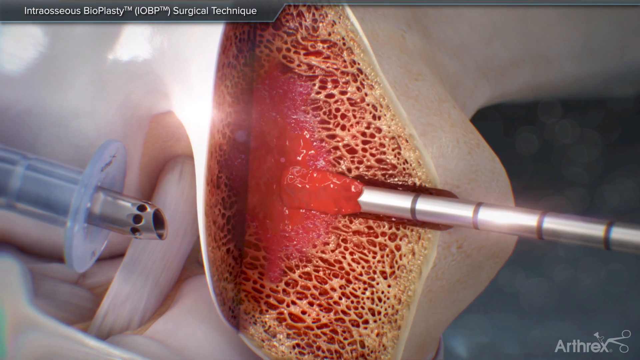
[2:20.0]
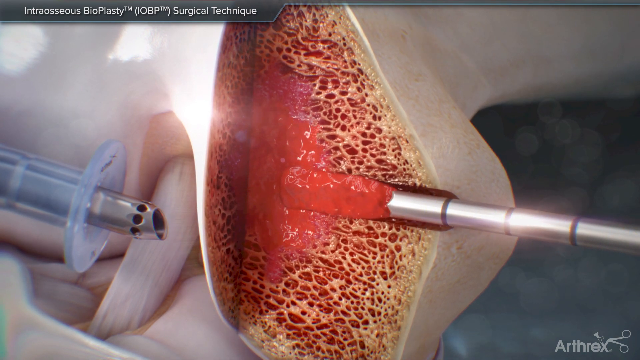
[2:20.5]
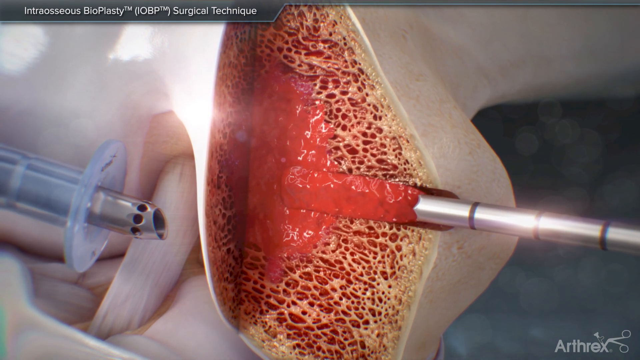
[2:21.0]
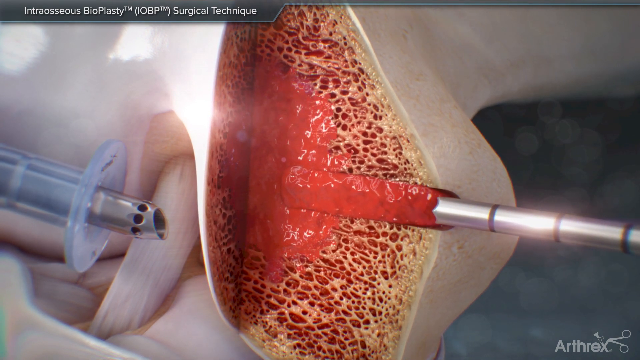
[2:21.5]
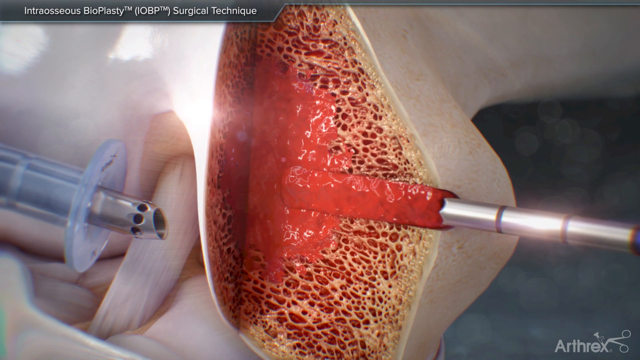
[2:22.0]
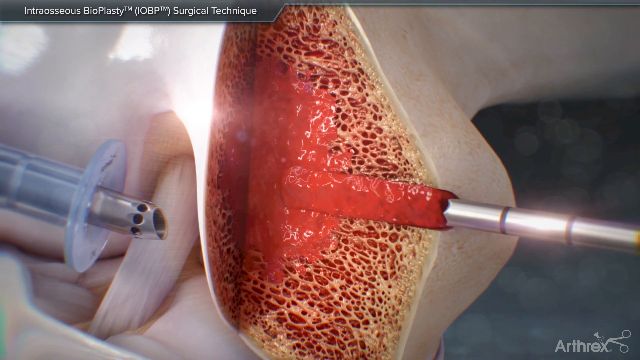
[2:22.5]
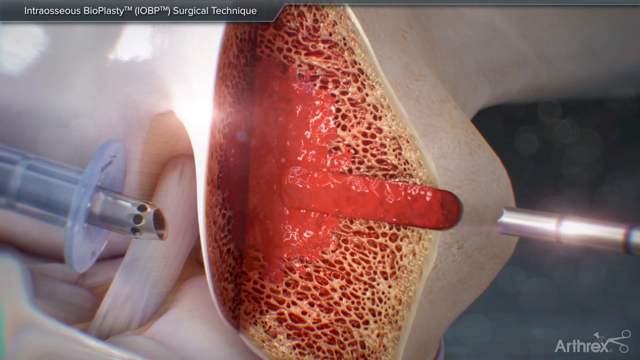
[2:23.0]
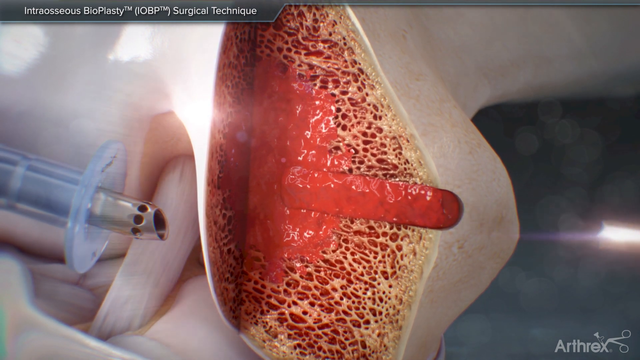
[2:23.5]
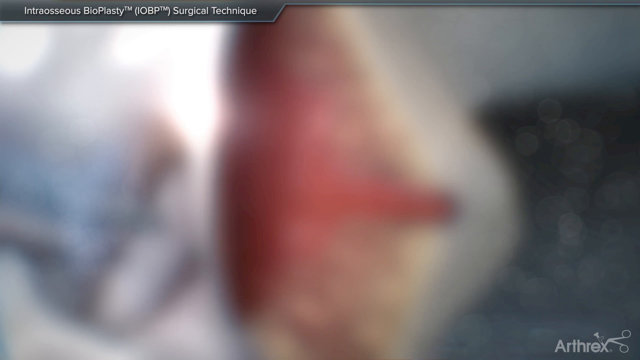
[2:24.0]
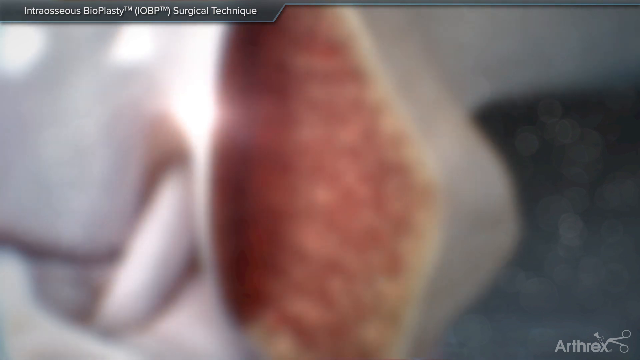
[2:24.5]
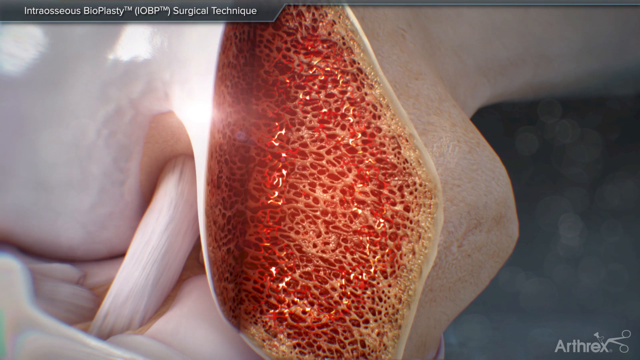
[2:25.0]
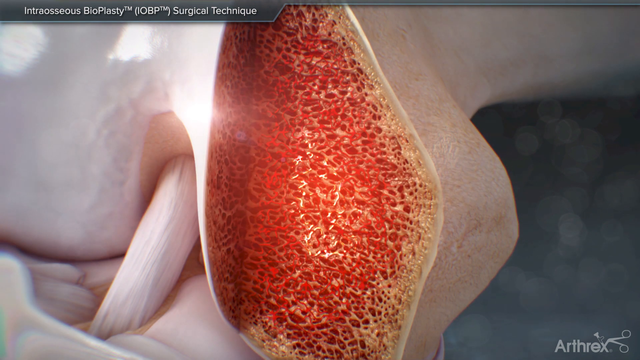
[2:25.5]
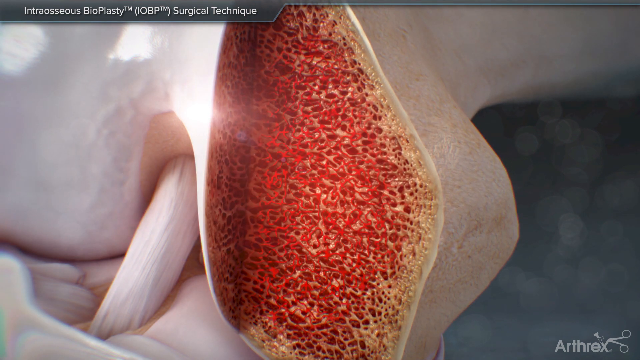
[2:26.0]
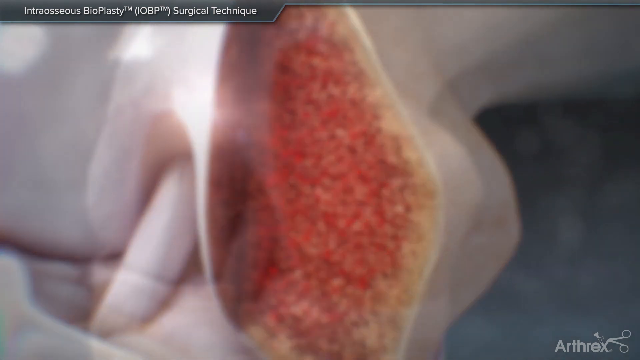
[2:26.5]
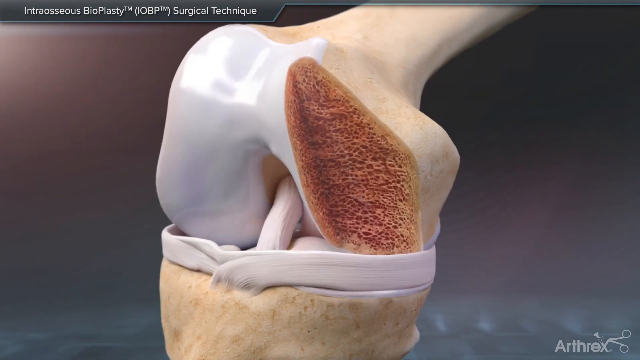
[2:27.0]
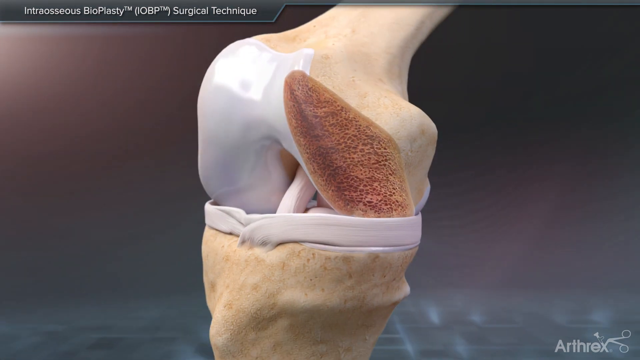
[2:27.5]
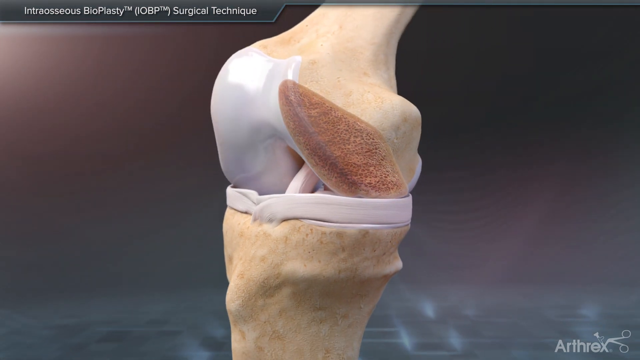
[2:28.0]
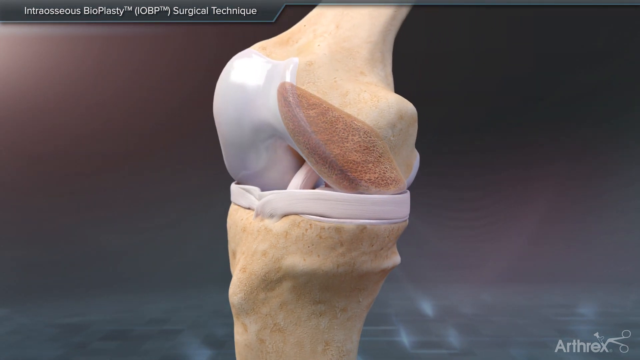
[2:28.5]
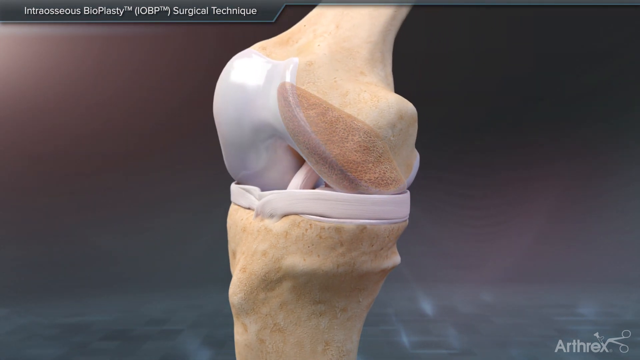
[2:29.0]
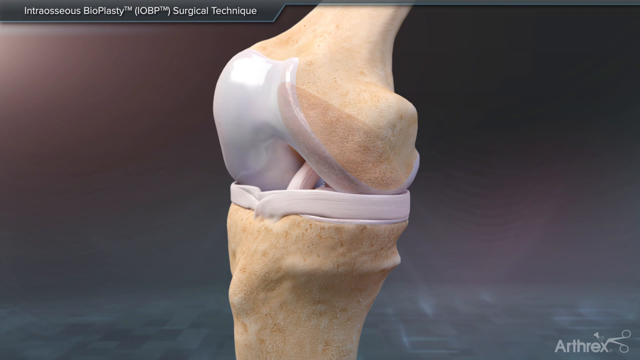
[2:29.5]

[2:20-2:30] The very large needle injects the combination of blood and the other fluid into the bone at the end of the femur as it is removed from left to right out of the drilled hole. In the 3D animation, the injected fluid, possibly stem cells, regenerates the damaged bone at the joint. The 3D model of the knee, where the damage was shown, now looks like the bone has been restored.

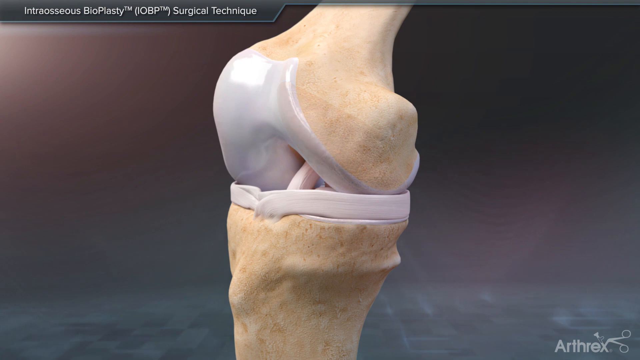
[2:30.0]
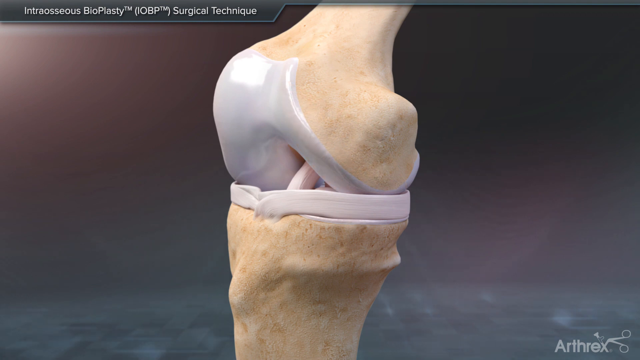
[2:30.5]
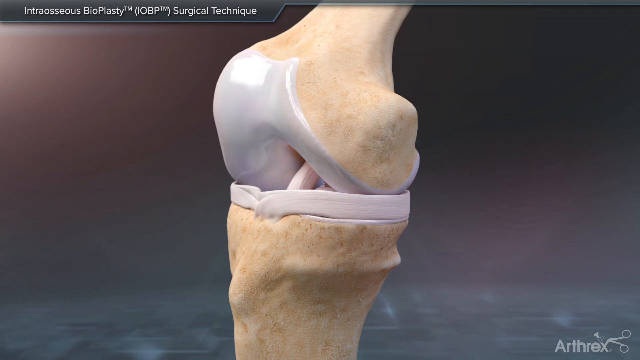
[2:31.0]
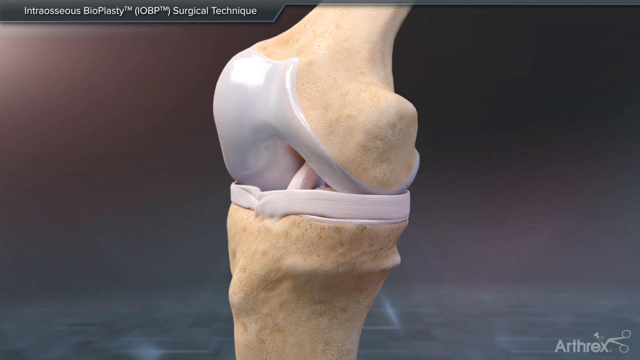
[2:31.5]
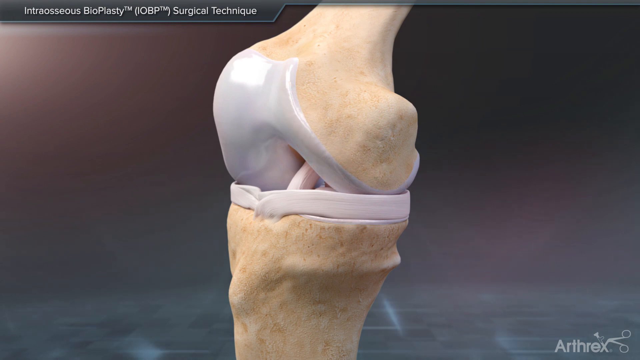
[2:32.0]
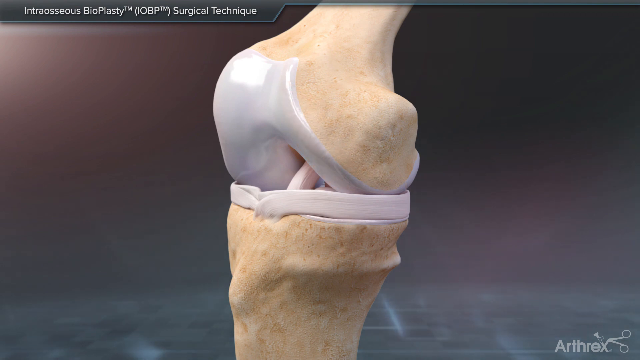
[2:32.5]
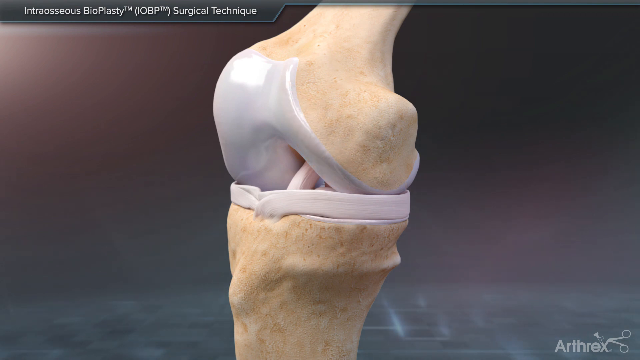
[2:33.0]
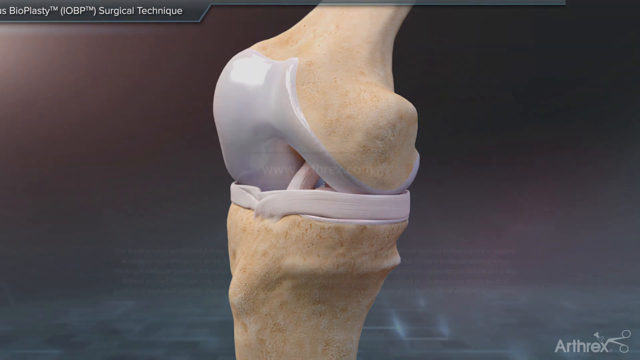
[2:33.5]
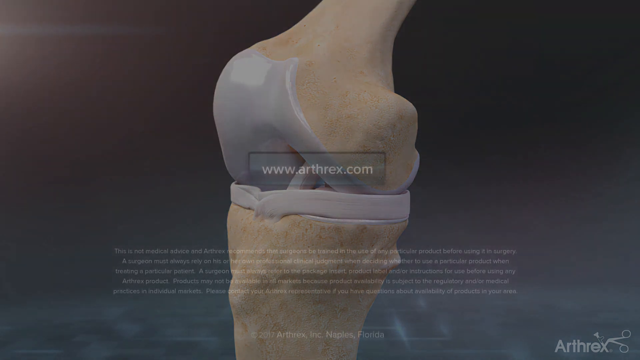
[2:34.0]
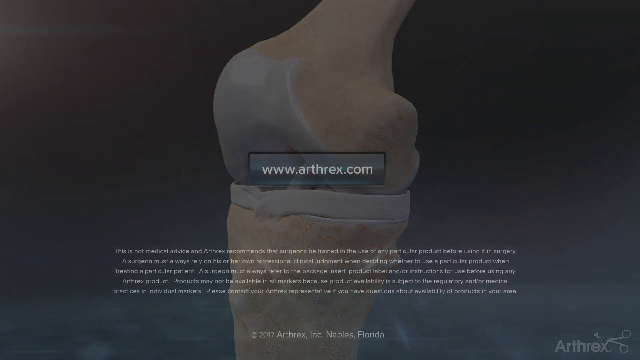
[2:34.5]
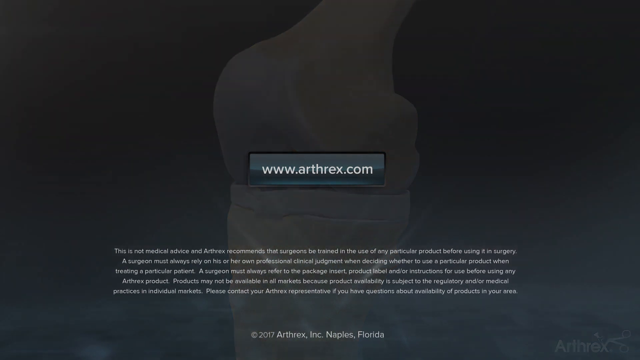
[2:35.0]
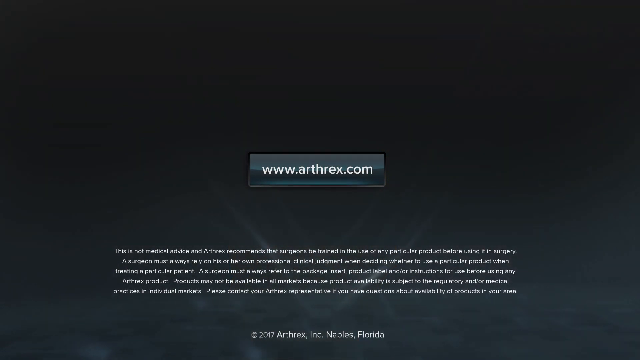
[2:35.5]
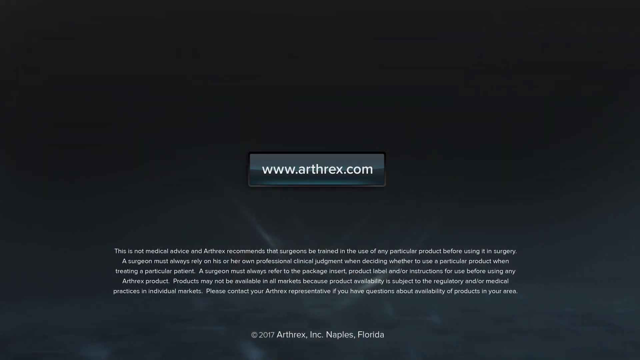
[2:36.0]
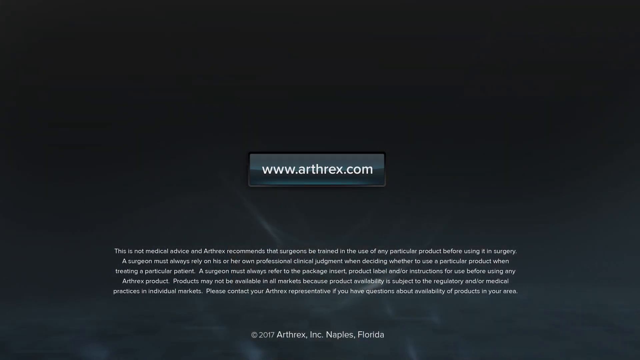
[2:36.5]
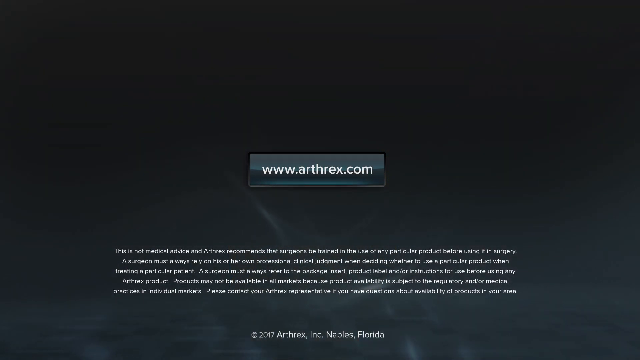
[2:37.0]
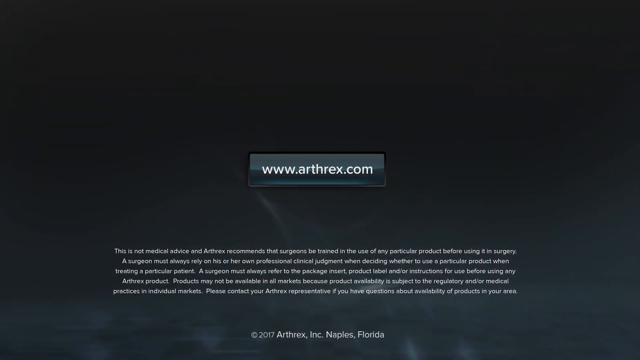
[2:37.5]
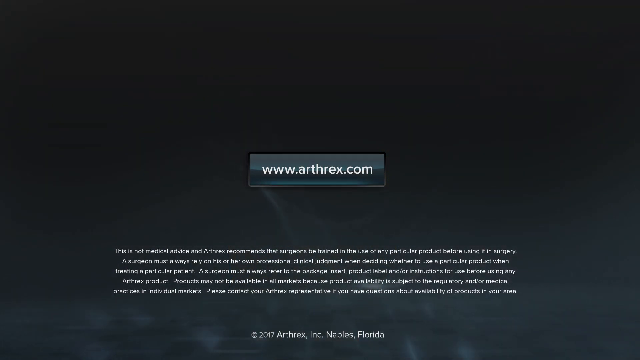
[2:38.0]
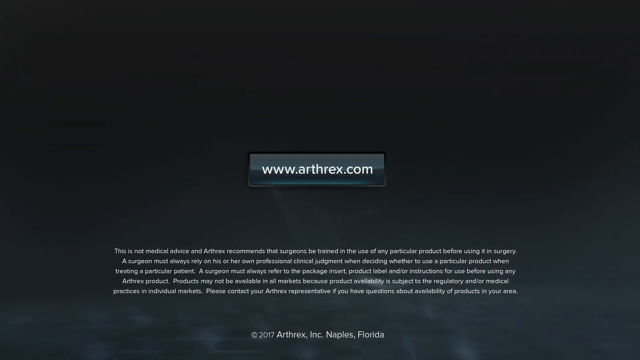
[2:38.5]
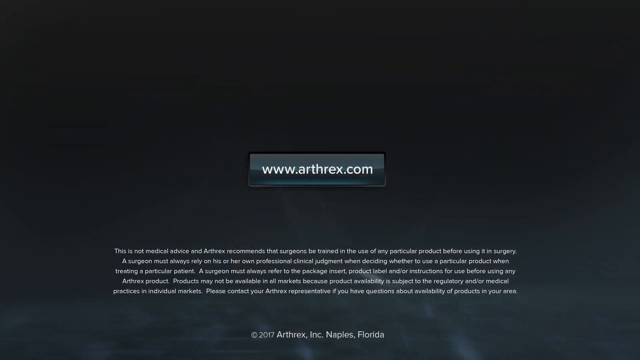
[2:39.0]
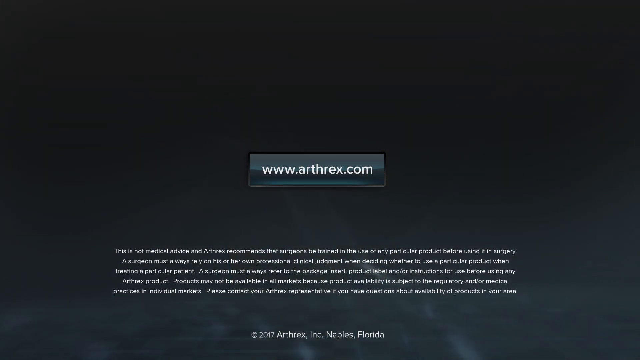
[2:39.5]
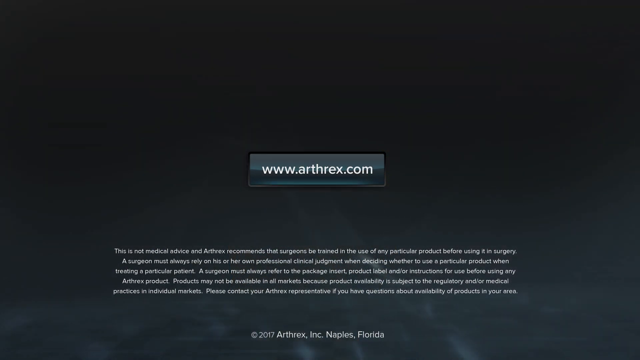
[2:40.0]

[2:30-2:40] The 3D model of the knee joint, focused on the end of the femur, shows the bone looking as though it has been repaired, presumably by the injected material. The ligament and the joint of the model are visible, with the model facing slightly to the left. In the upper left-hand corner, the animation is identified as modeling the procedure of the intraosseous bioplasty, or OBP, surgical technique. An end card follows with the website "www.anthrex.com" and a disclaimer at the bottom that says "this is not medical advice" and recommends that the surgeon be trained in the use of the product.